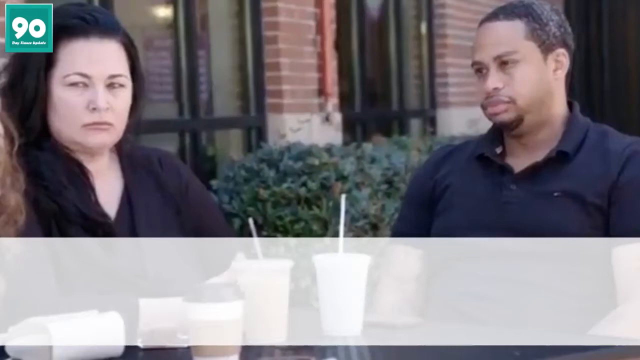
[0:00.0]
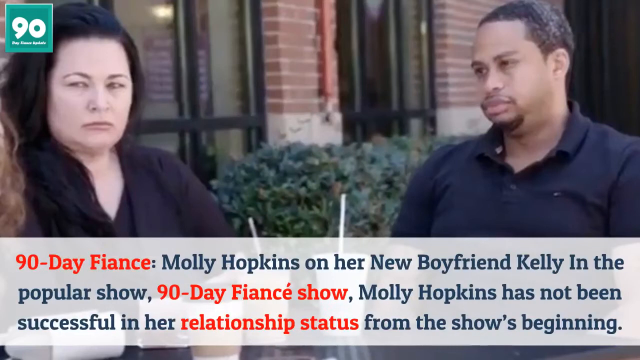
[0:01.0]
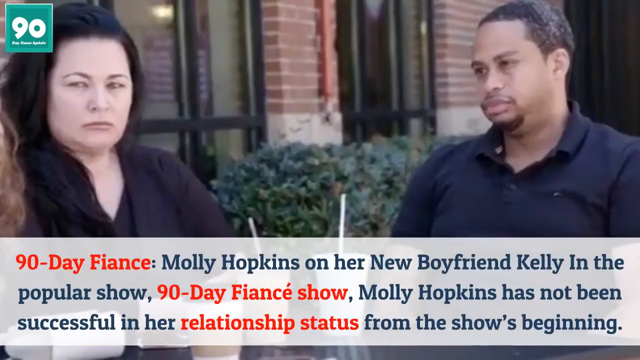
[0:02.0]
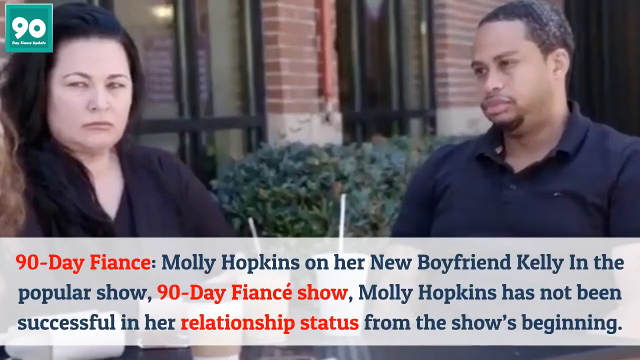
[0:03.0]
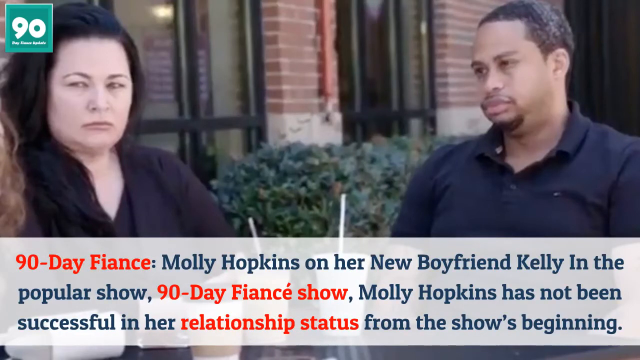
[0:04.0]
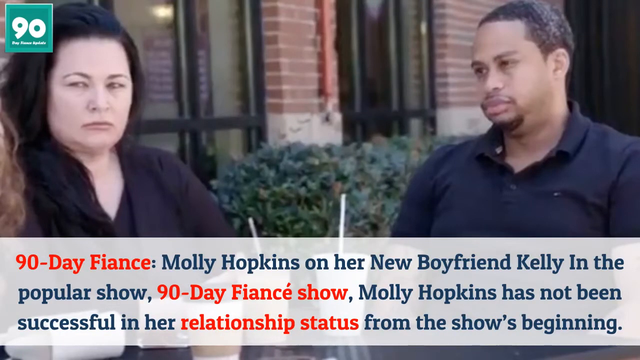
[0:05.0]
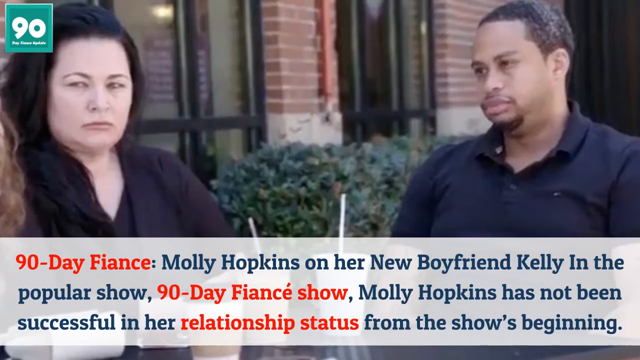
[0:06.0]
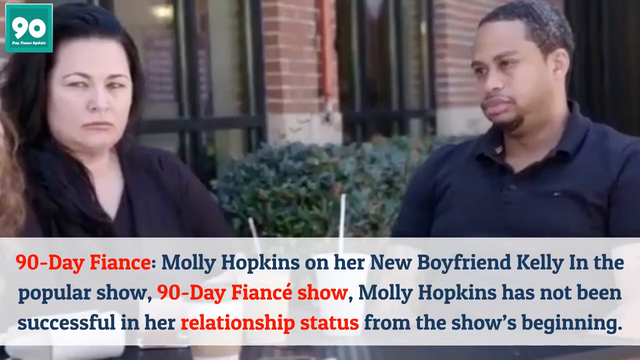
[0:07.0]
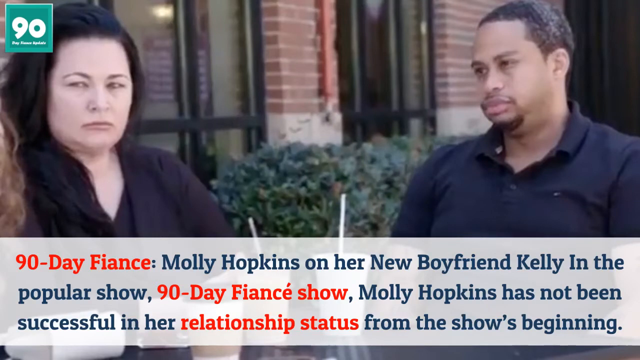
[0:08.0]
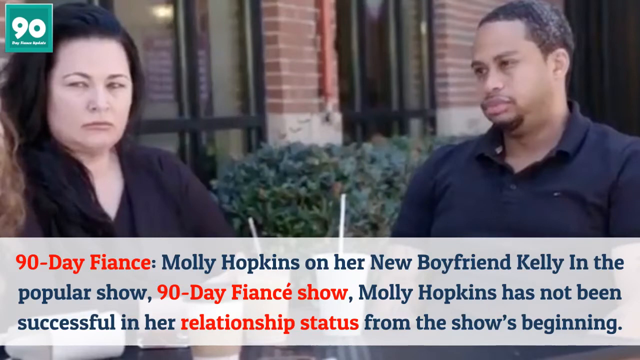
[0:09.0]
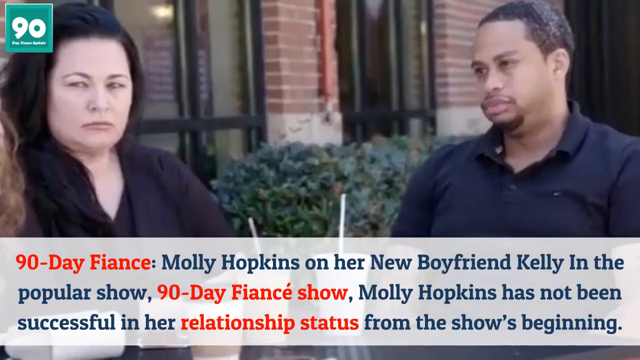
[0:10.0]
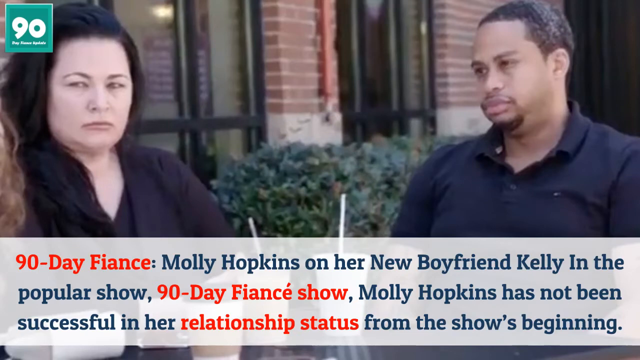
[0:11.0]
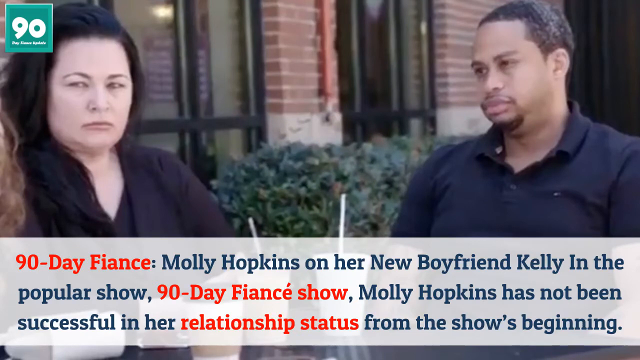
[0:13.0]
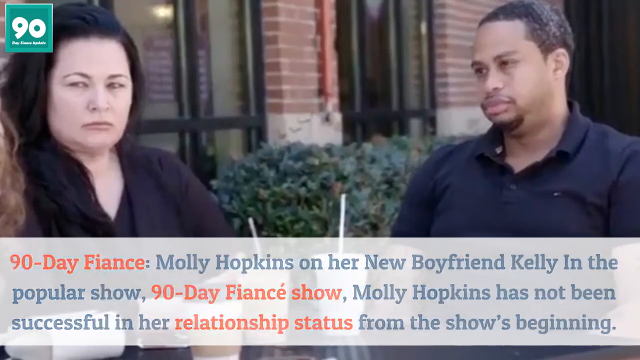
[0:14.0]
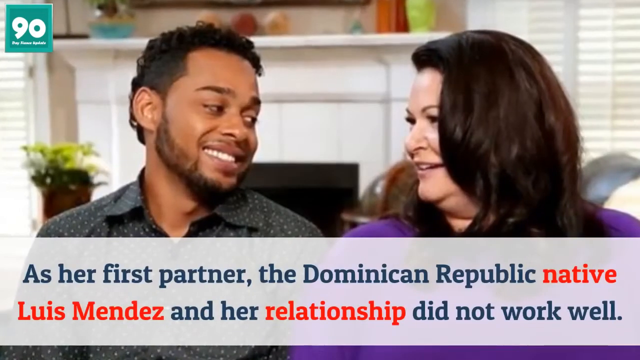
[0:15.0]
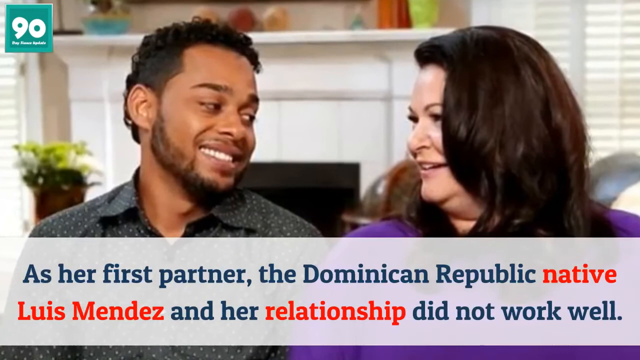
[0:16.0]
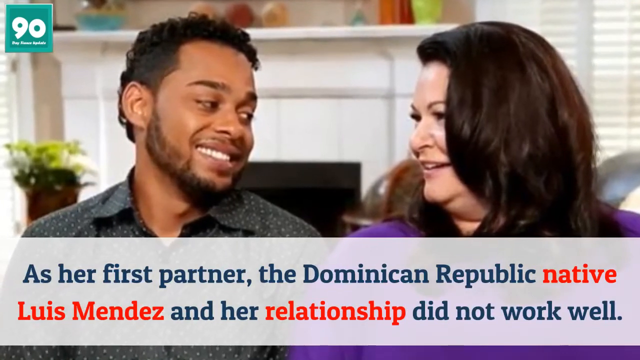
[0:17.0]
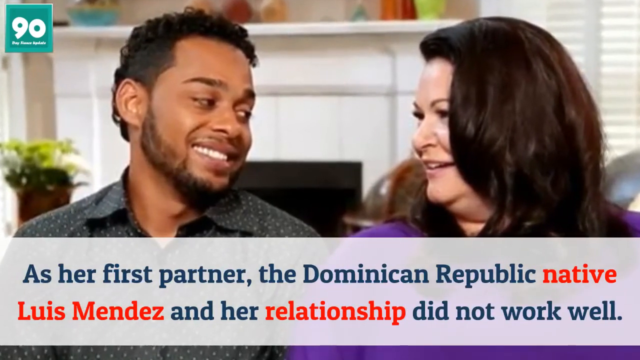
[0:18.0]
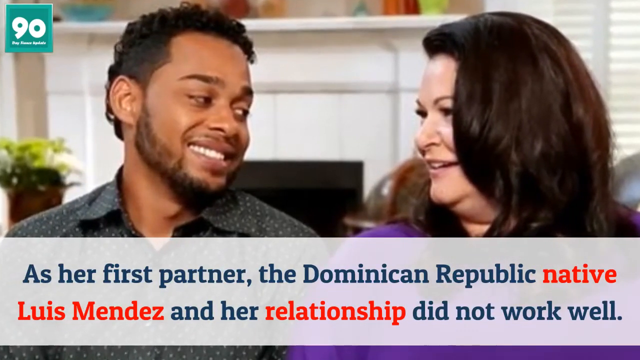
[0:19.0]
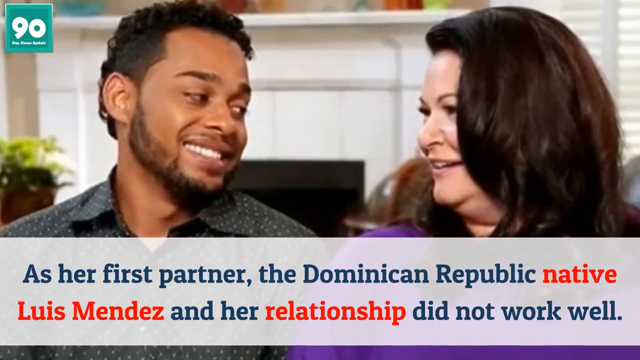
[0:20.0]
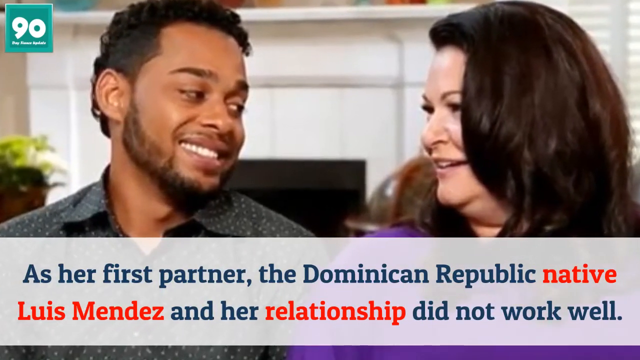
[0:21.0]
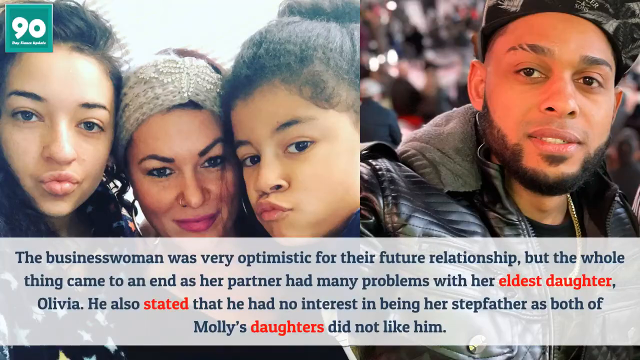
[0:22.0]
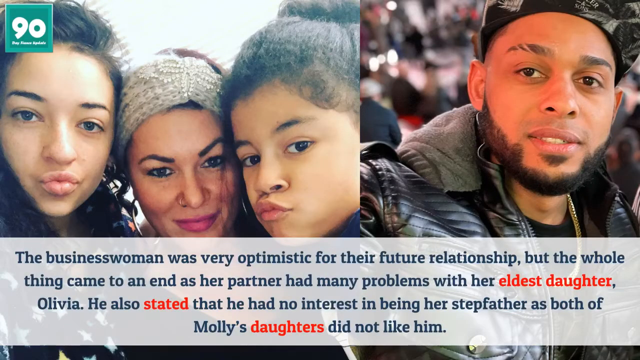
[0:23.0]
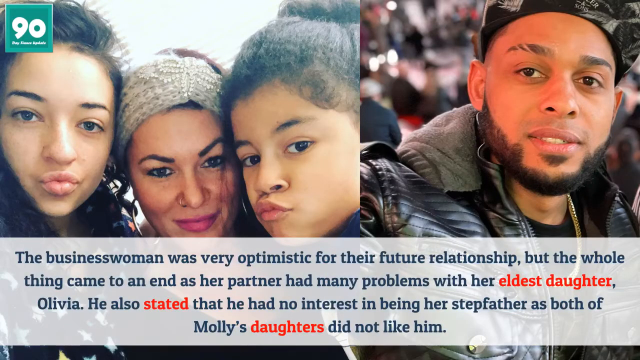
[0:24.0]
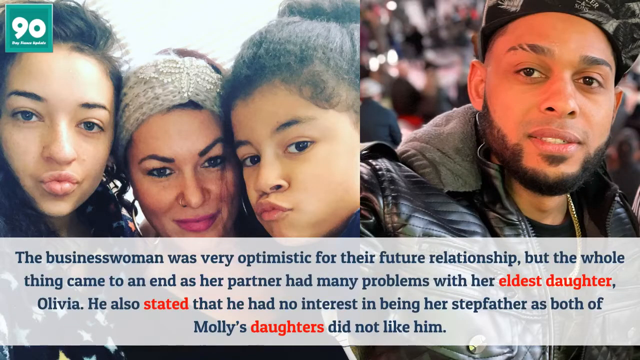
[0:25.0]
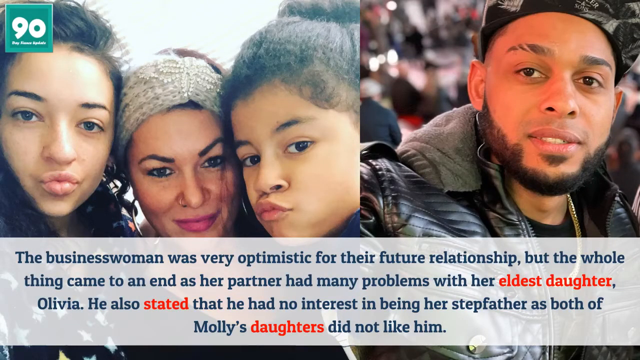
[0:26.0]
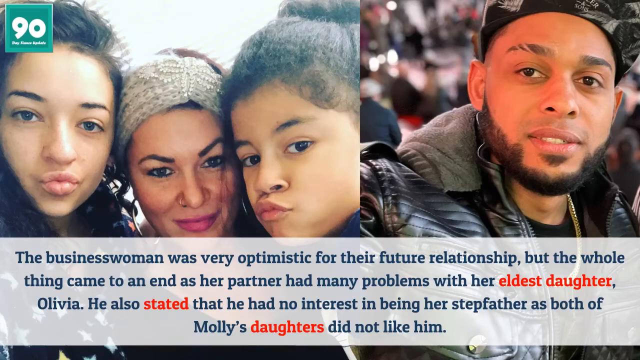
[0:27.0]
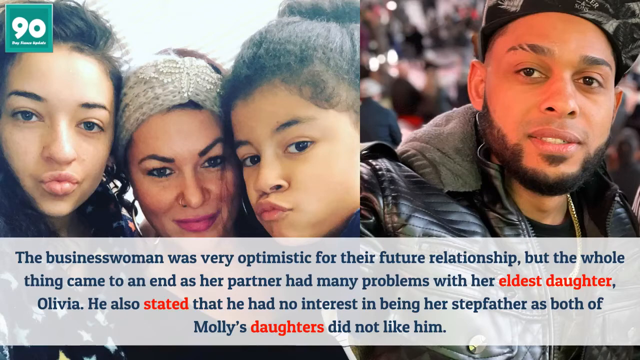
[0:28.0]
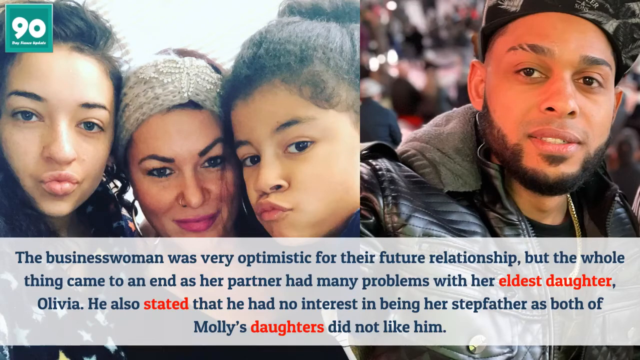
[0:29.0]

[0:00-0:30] The video begins with a slideshow showing what appear to be two cast members of the show 90 Day Fiance: a woman on the left side and a man on the right side. They appear to be annoyed at each other. A transparent white banner appears at the bottom of the video, and over it the text says "90 Day Fiance Molly Hopkins on her new boyfriend Kelly in the popular show 90 Day Fiance Show. Molly Hopkins has not been successful in her relationship status from the show's beginning." The image then transitions to the next slide, which shows the couple looking at each other and apparently smiling. They are inside a home, sitting at a couch. The banner at the bottom now says "That's her first partner, the Dominican Republic native, Luis Mendez, and the relationship did not work well."